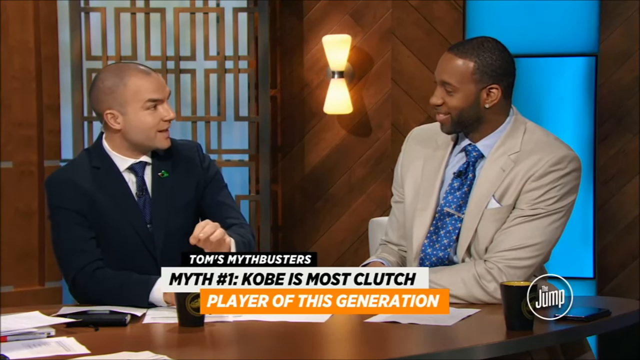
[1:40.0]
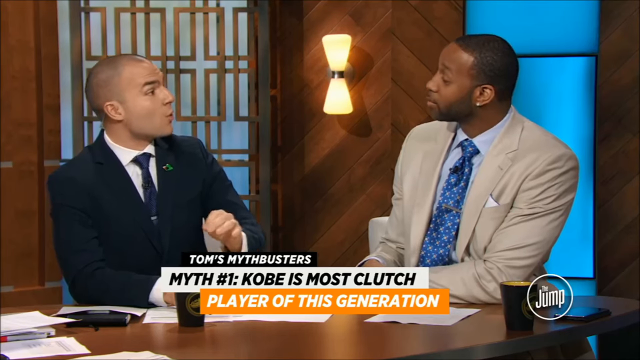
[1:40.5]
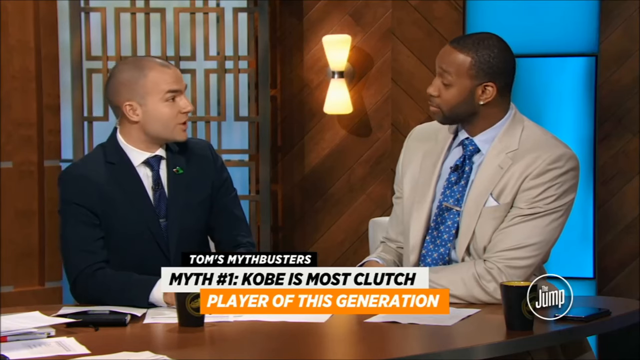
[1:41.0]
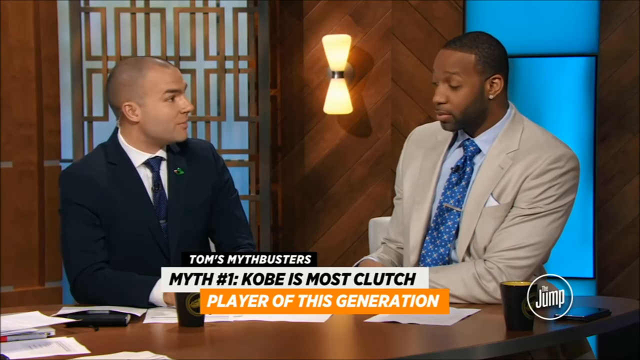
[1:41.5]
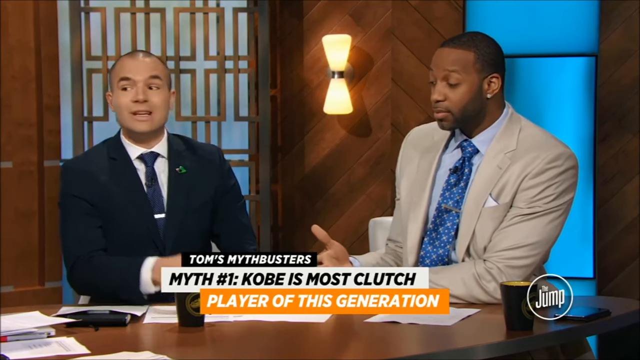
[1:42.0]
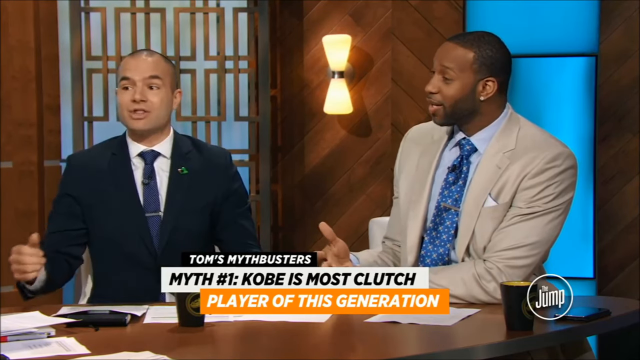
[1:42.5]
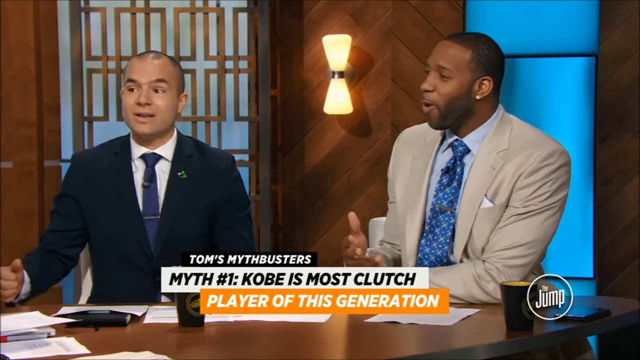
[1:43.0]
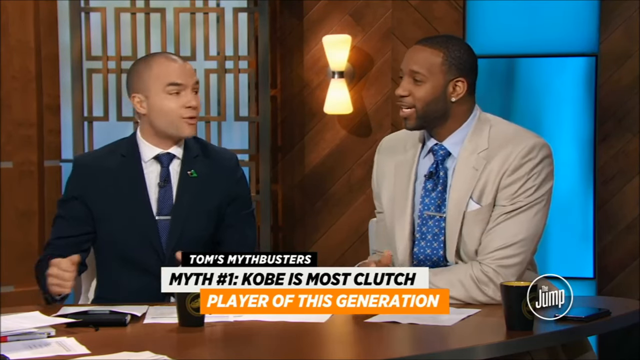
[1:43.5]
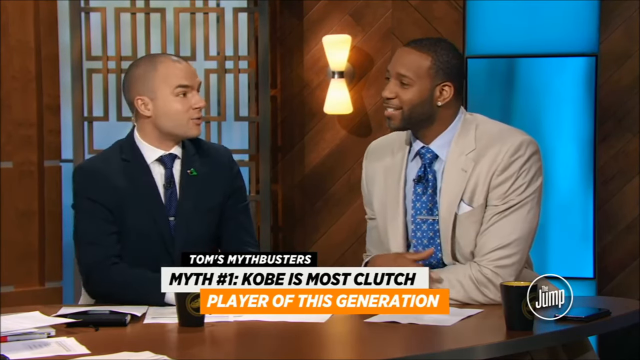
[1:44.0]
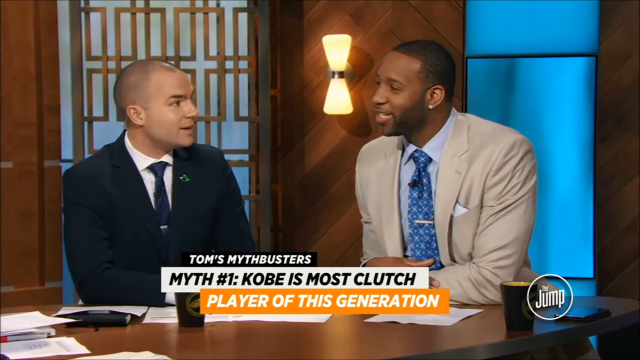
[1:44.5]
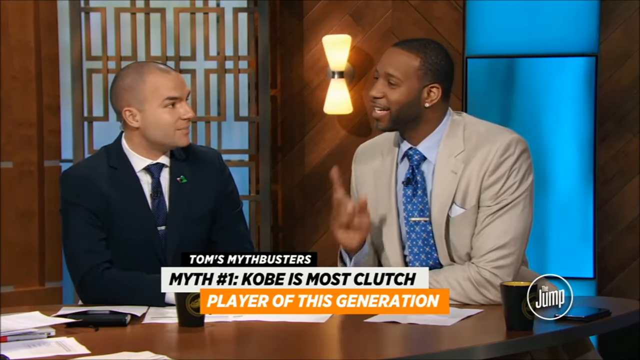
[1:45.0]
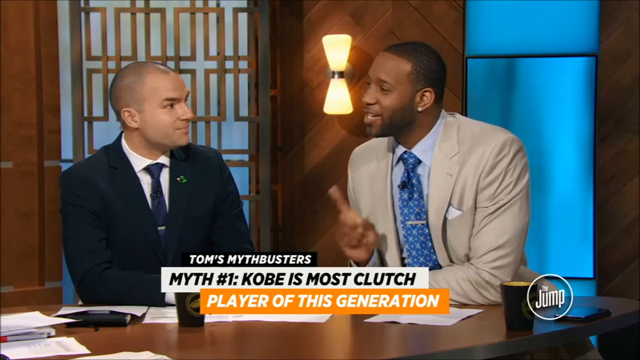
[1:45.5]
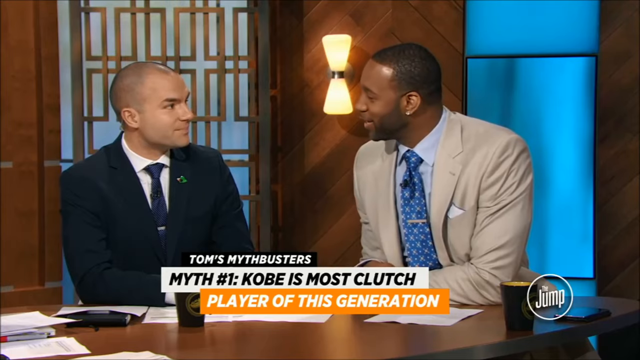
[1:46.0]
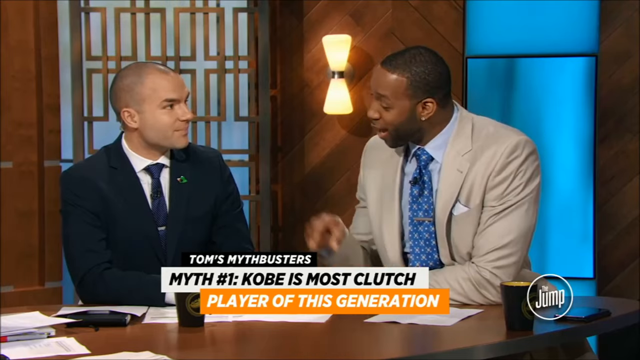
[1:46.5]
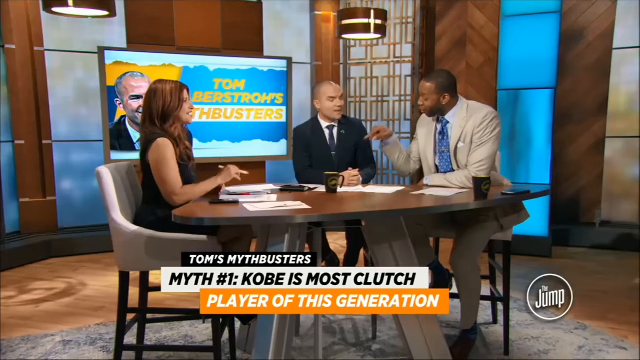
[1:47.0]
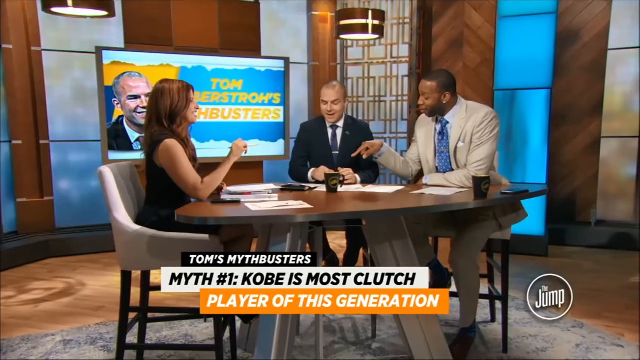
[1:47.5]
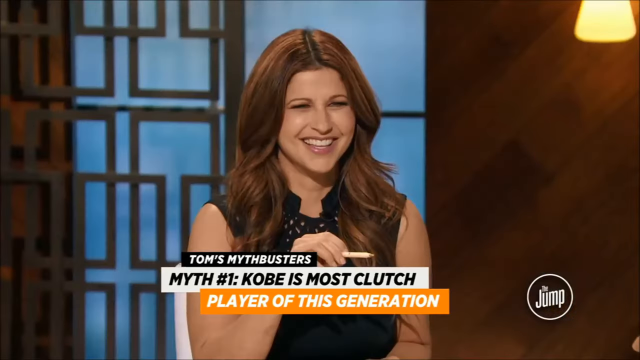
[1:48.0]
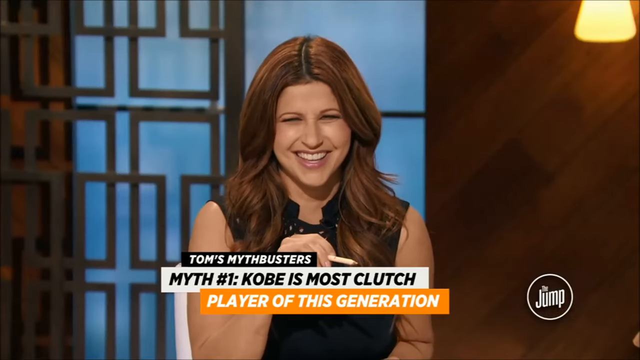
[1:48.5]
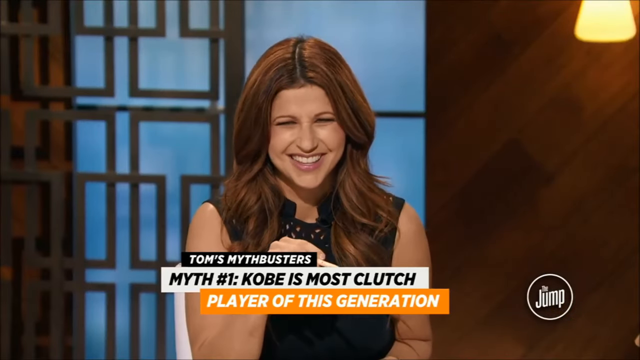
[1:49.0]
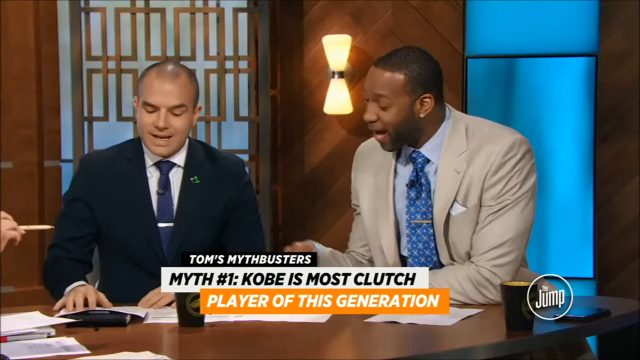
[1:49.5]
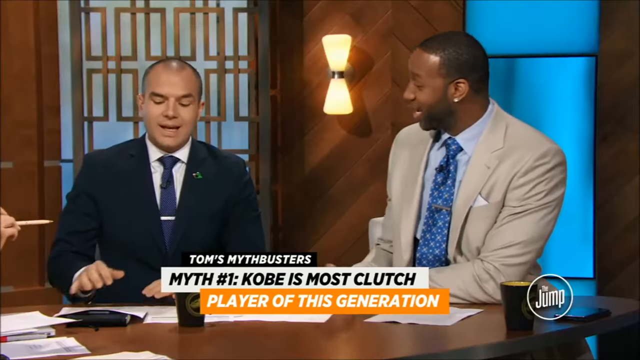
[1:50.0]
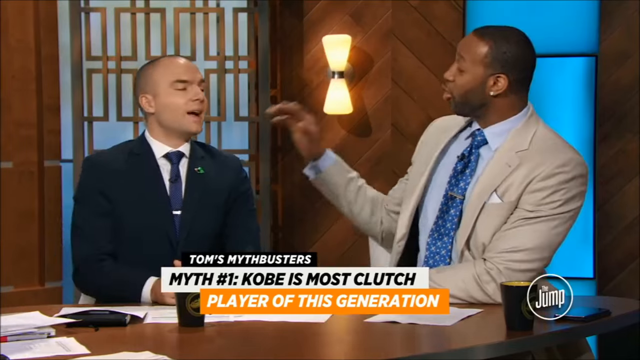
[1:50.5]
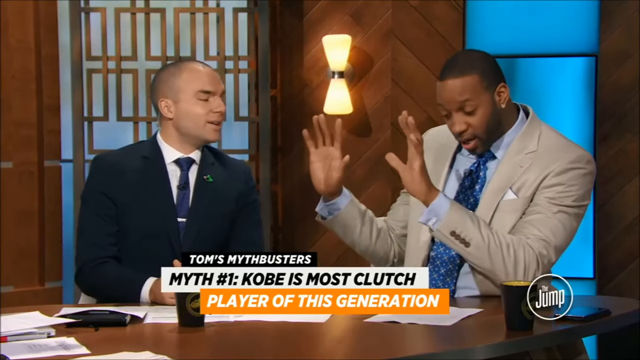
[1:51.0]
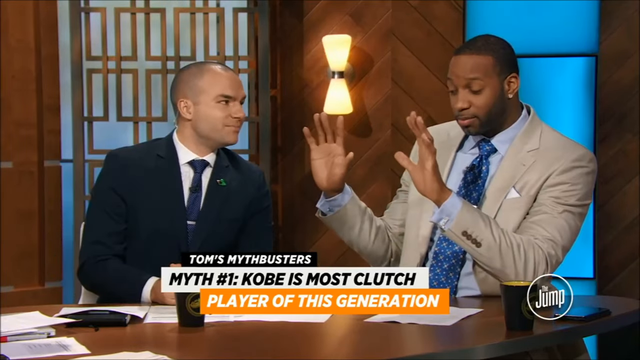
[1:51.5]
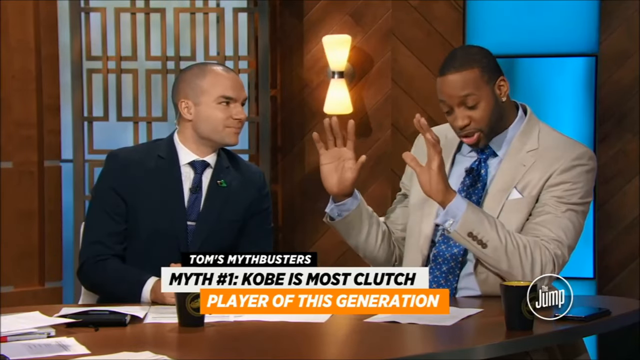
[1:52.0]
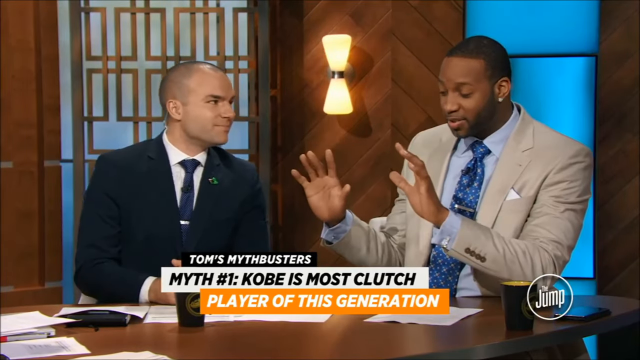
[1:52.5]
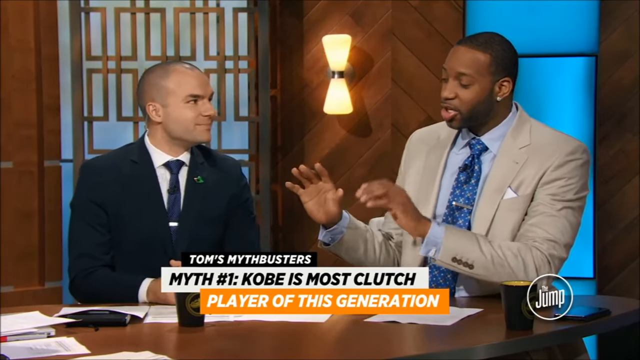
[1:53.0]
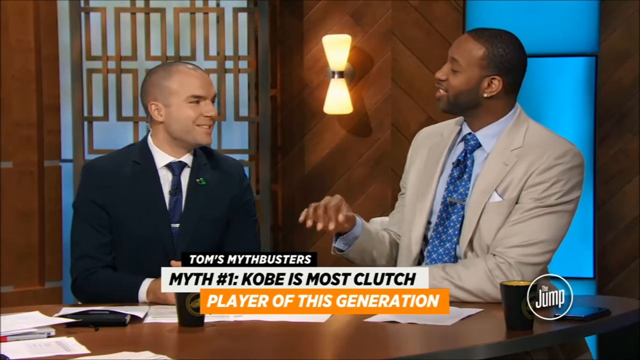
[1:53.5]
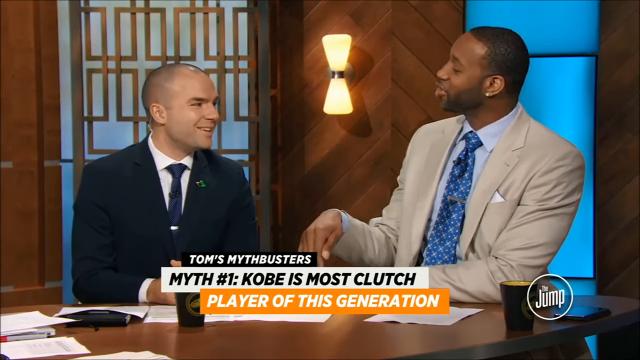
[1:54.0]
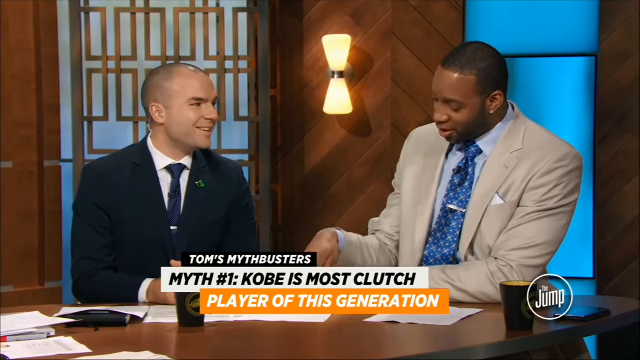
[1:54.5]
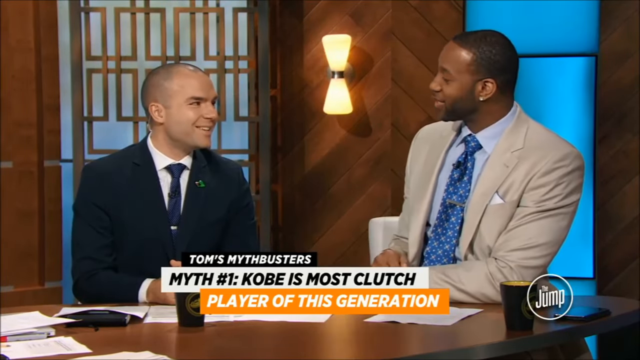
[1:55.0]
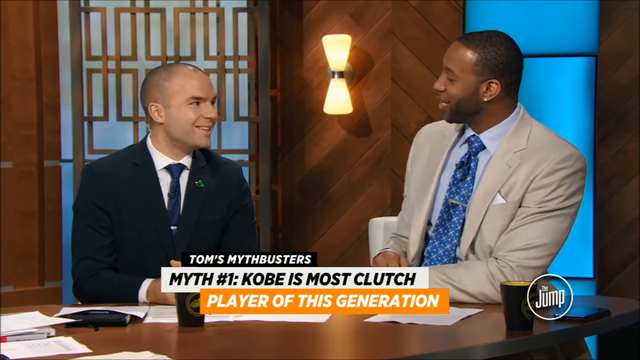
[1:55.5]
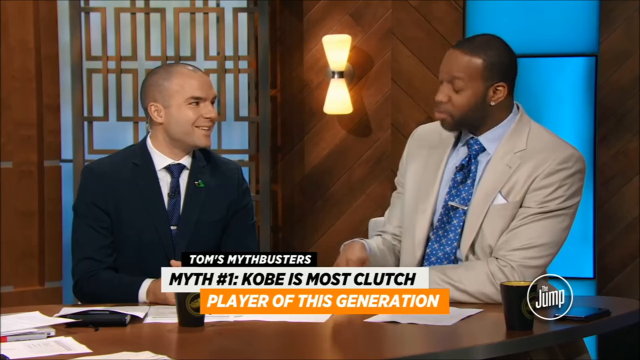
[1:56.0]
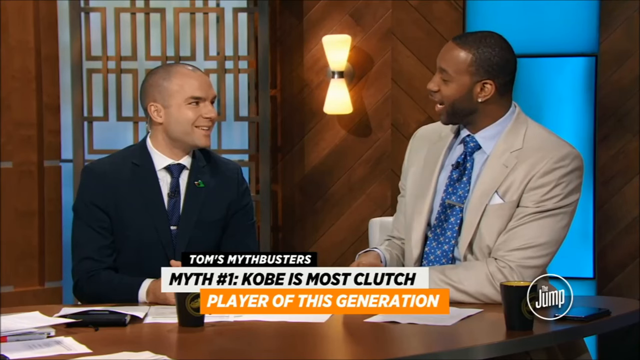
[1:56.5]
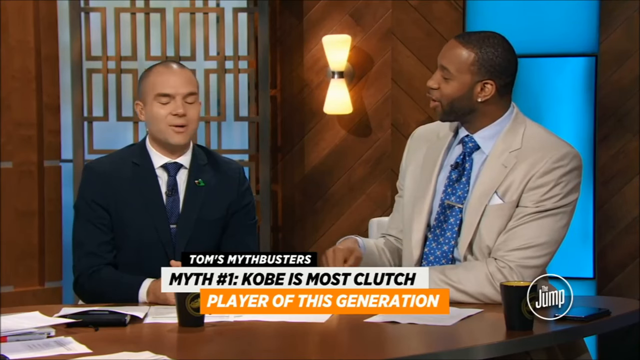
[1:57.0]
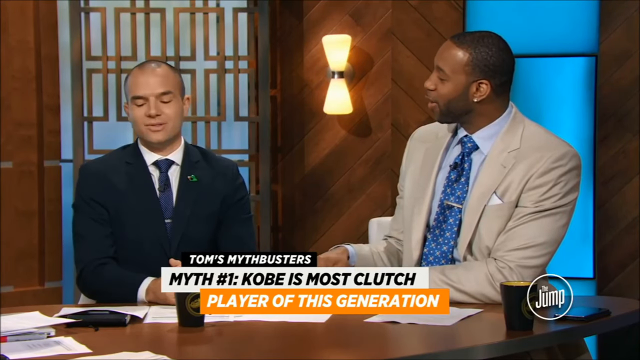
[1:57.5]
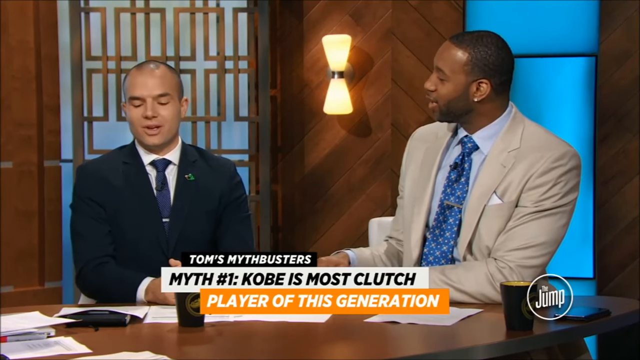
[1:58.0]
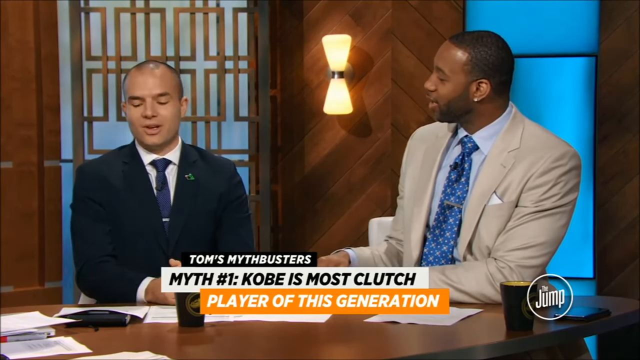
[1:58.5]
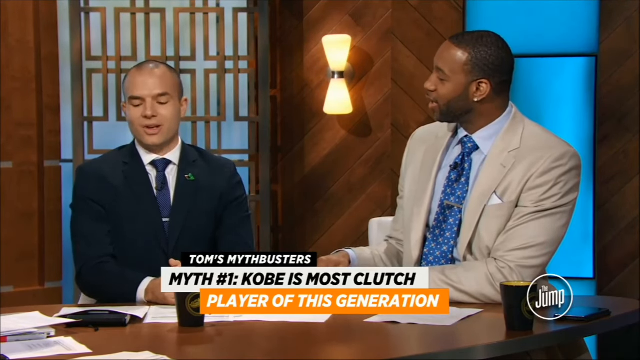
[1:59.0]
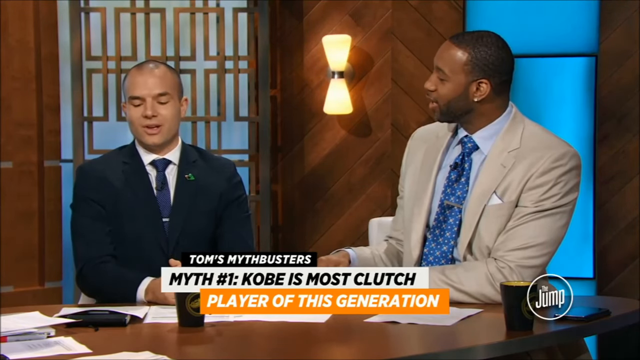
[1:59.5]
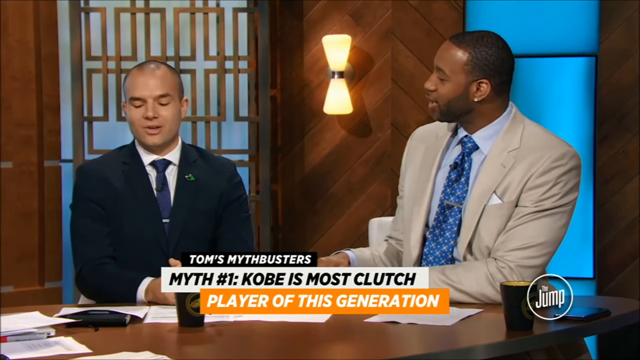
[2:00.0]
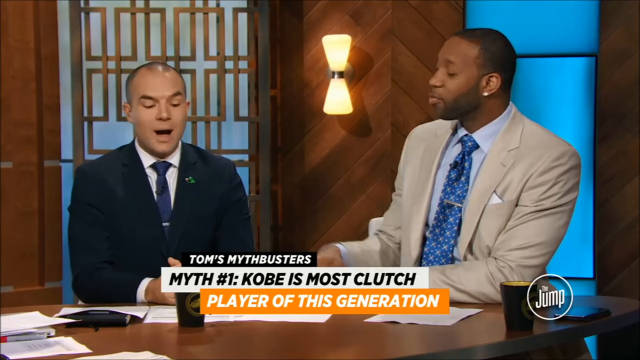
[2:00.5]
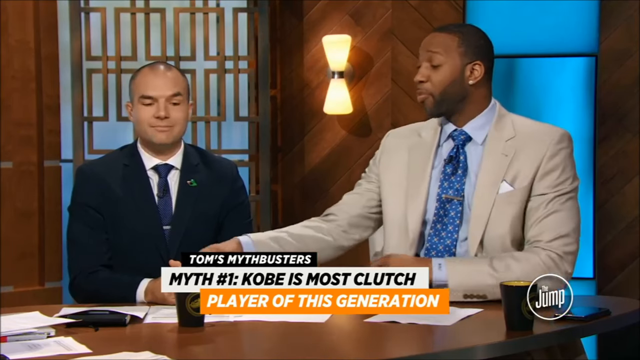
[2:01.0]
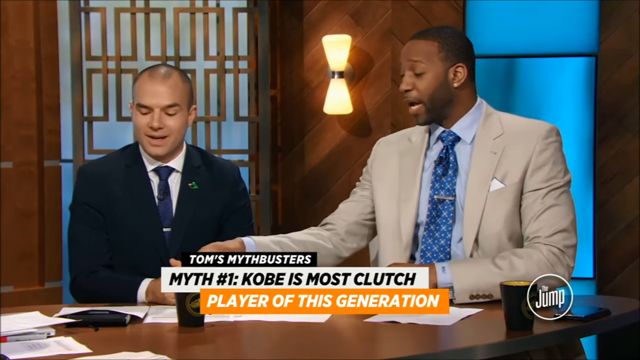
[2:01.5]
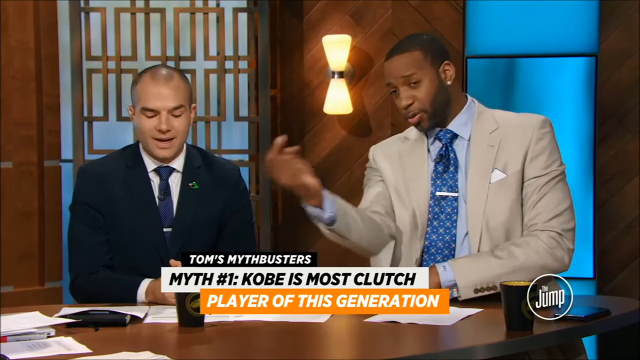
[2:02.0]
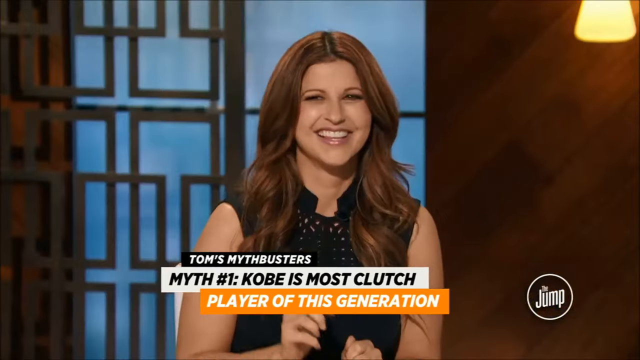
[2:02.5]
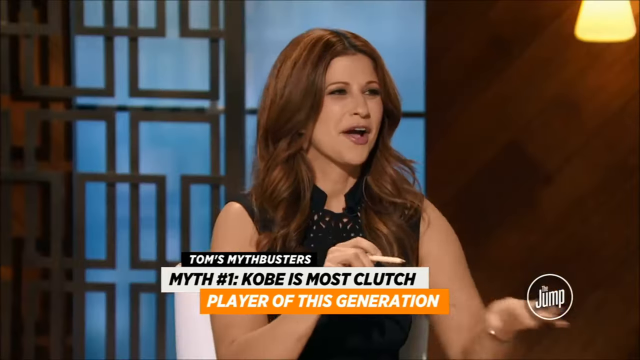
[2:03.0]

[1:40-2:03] The white man has his elbow resting on the table, with a little of the sleeve of his undershirt showing. There is a black cup with what looks like a gold emblem, almost like a crest, on the front. He has paper documents, one right in front of his right arm with what looks like a black device underneath it, and more stacks of papers are in the bottom left corner. The white man turns from the Black man to face the woman, gesturing with his right hand as he talks. The other man uses his hands, pressing a little on his chest and then emphatically pointing his index finger down at his notes. Facing the woman, she is laughing, squinting with her teeth showing a little. One man looks offended or taken aback, shielding with his hands as the white man leans forward a little. The Black man points to make an emphasis with a document, apparently one the white man is talking about. Behind them is a lamp with a double triangle look and a metal piece holding the two pieces of the globe together, against a herringbone design of wood pieces. The image of the white man glitches briefly with a jerking motion.